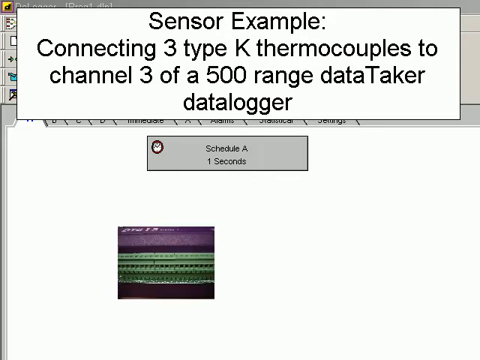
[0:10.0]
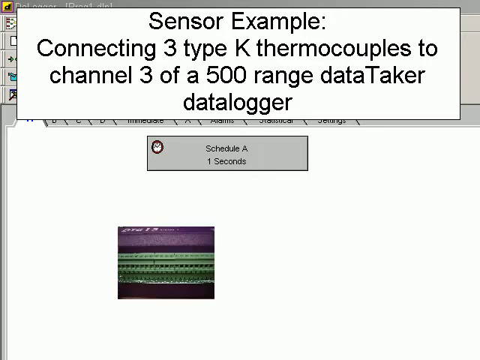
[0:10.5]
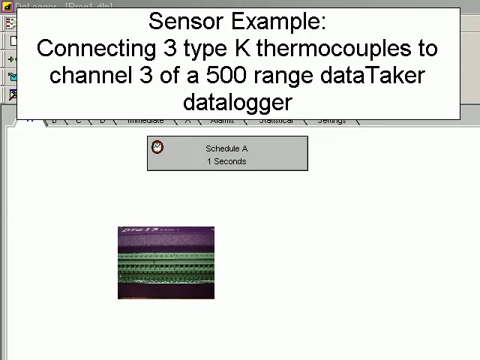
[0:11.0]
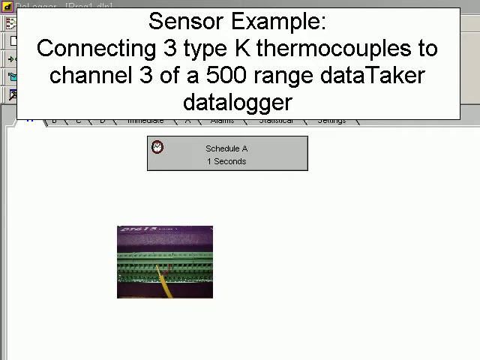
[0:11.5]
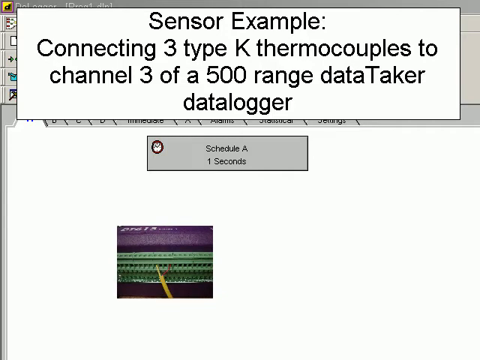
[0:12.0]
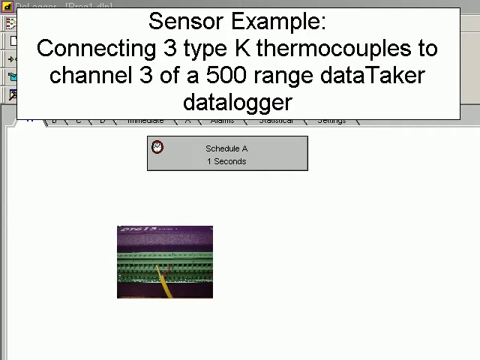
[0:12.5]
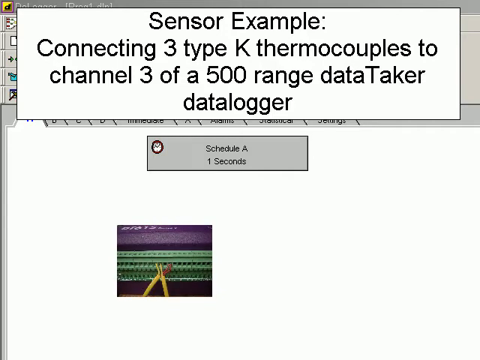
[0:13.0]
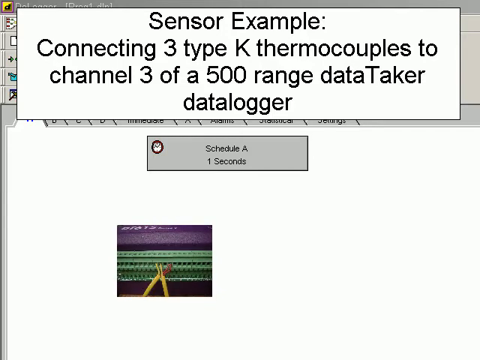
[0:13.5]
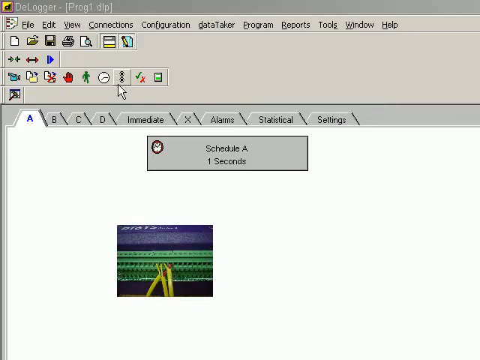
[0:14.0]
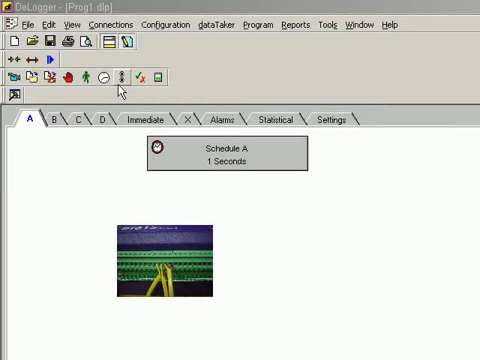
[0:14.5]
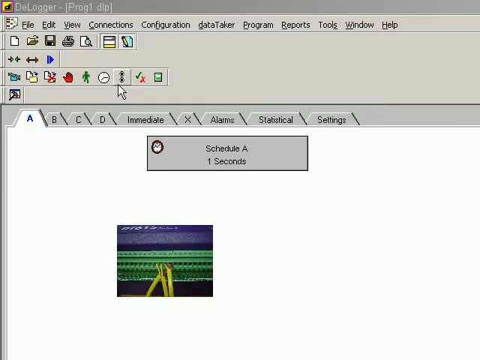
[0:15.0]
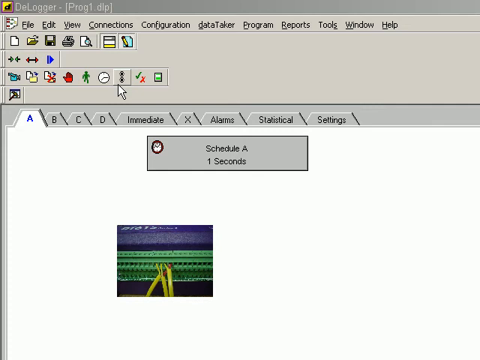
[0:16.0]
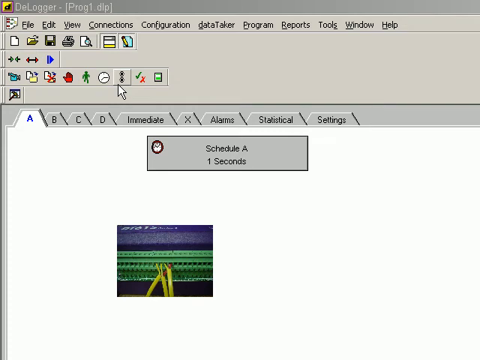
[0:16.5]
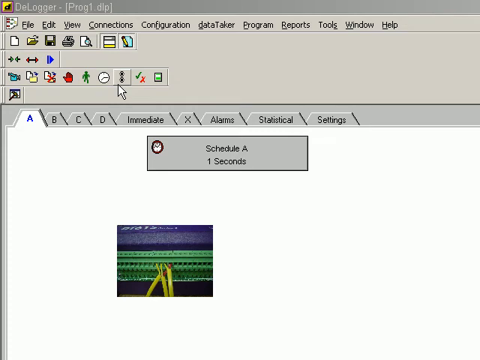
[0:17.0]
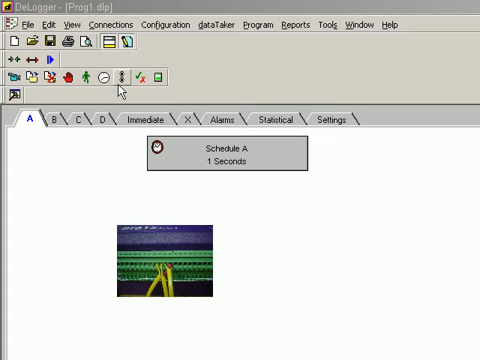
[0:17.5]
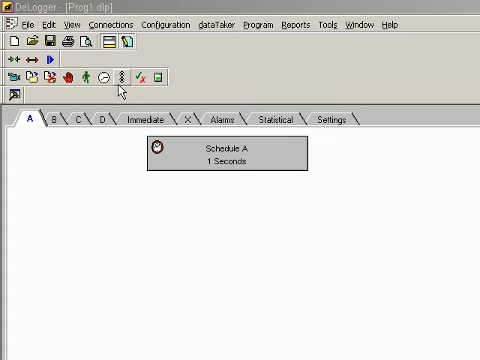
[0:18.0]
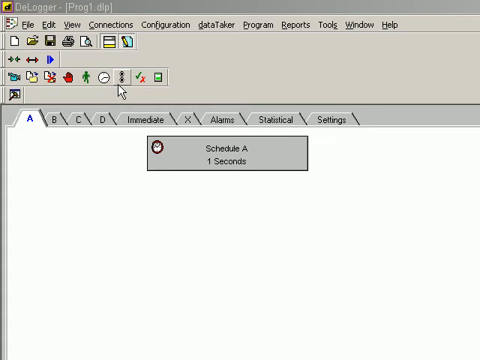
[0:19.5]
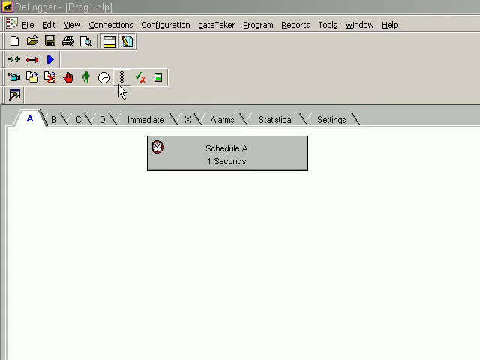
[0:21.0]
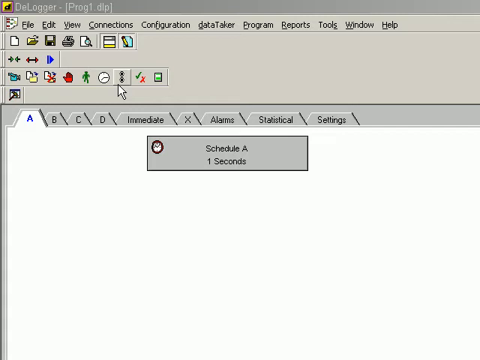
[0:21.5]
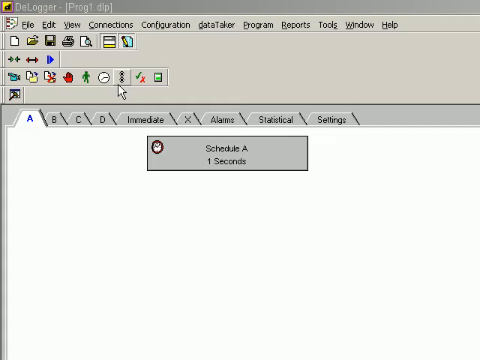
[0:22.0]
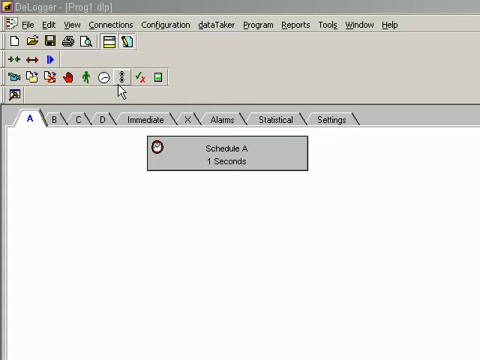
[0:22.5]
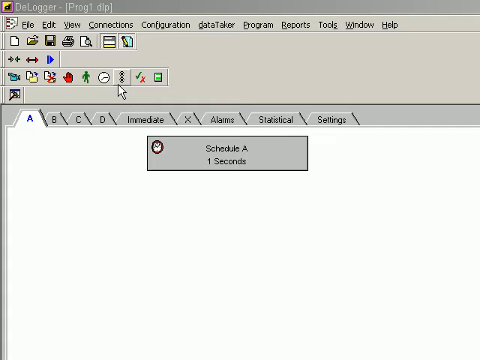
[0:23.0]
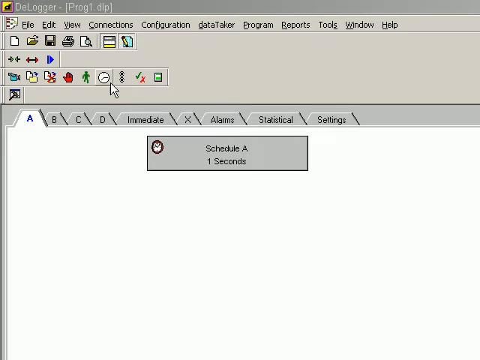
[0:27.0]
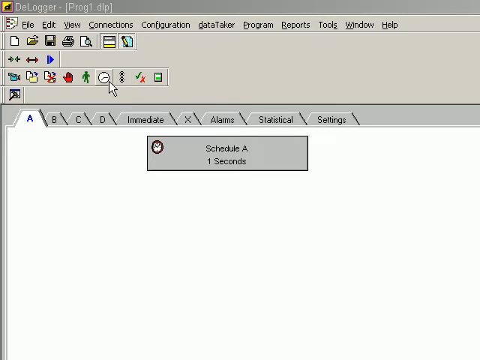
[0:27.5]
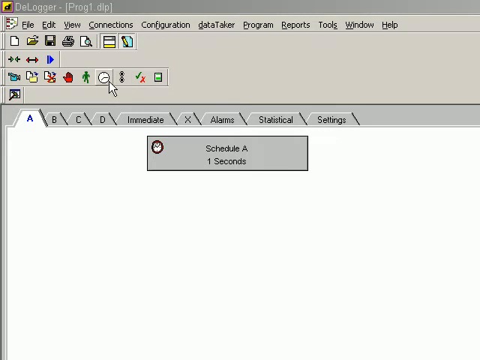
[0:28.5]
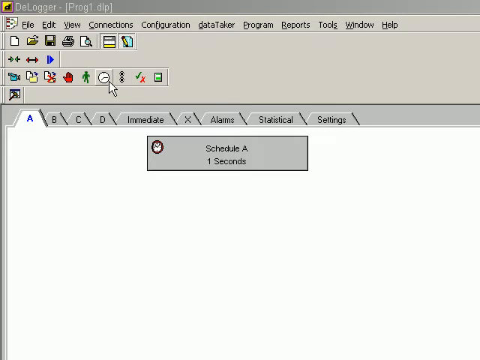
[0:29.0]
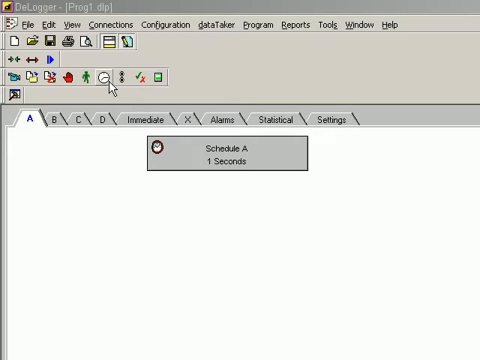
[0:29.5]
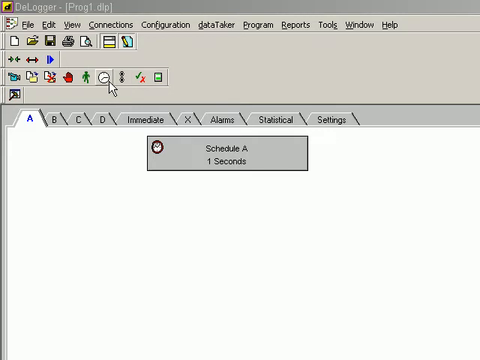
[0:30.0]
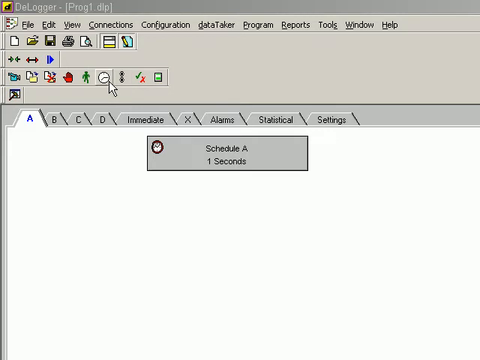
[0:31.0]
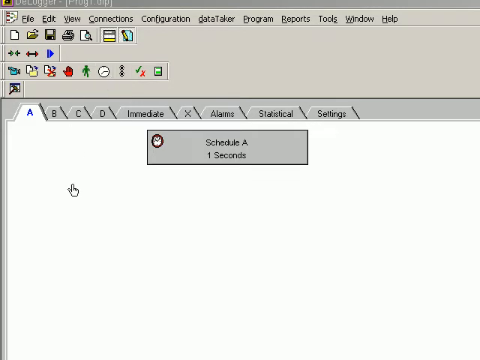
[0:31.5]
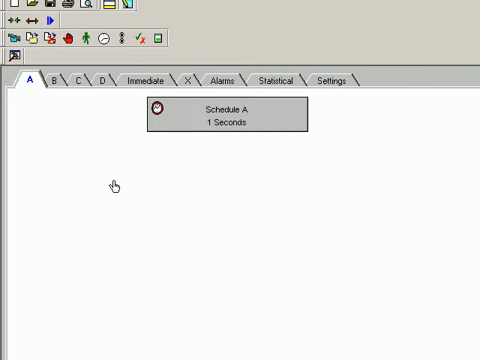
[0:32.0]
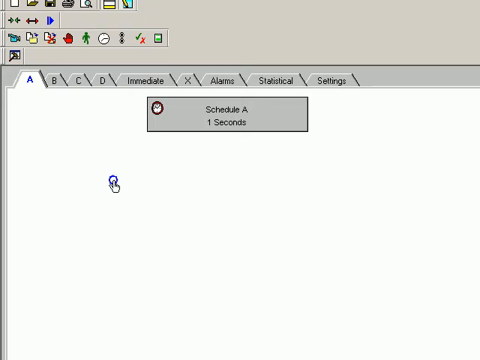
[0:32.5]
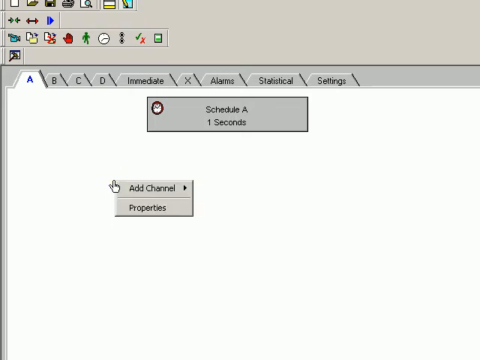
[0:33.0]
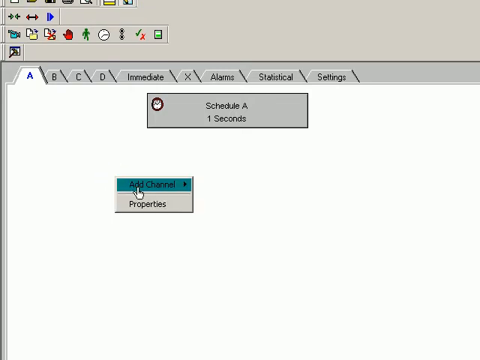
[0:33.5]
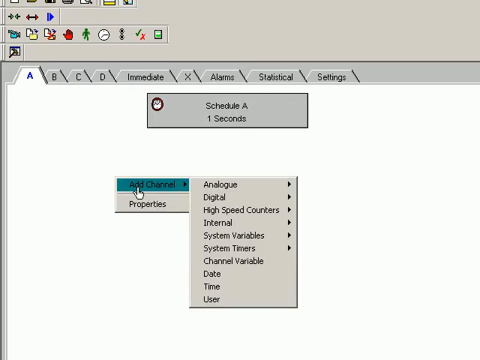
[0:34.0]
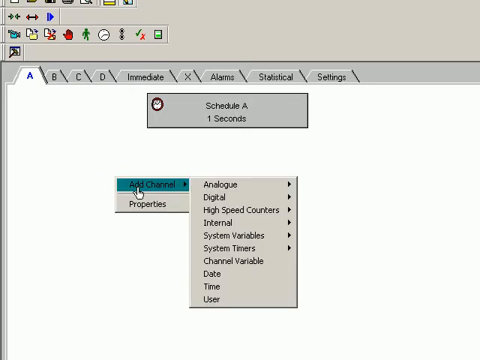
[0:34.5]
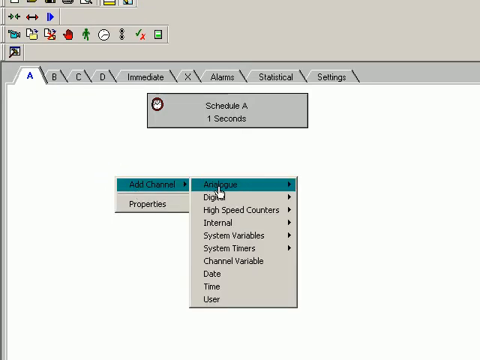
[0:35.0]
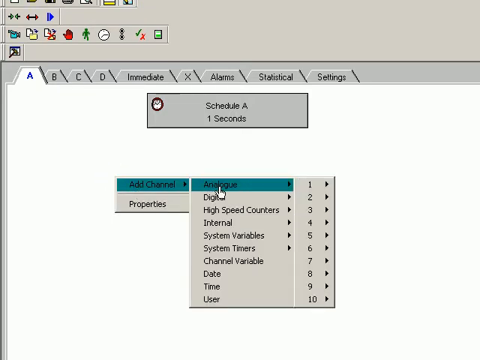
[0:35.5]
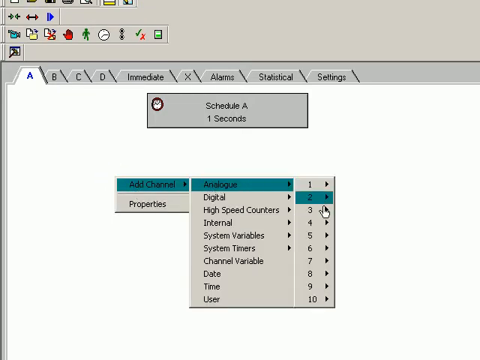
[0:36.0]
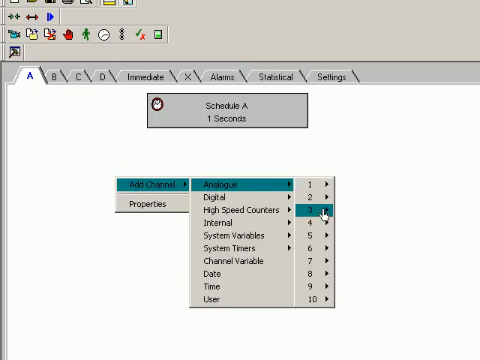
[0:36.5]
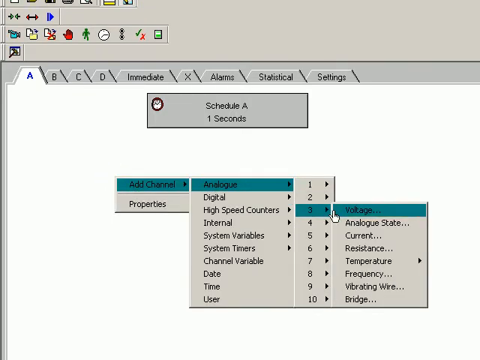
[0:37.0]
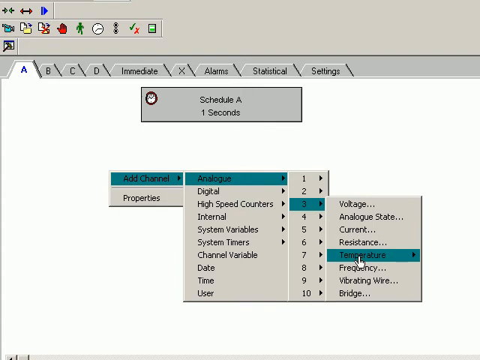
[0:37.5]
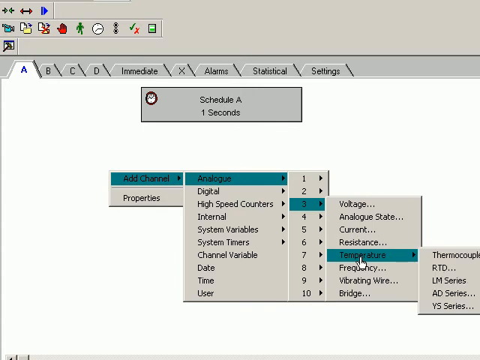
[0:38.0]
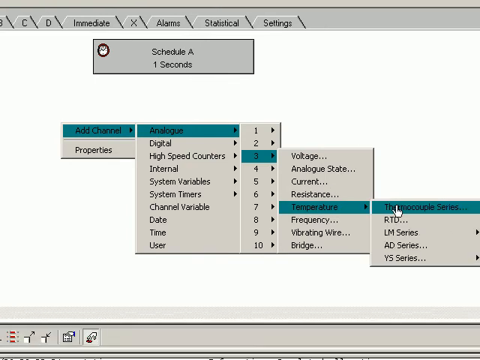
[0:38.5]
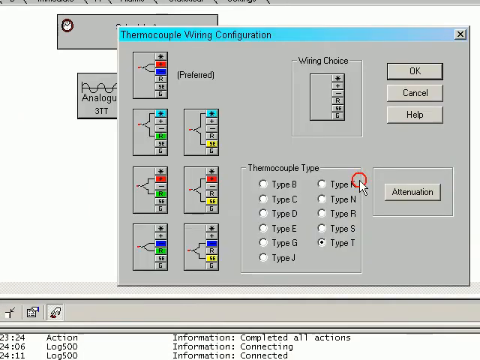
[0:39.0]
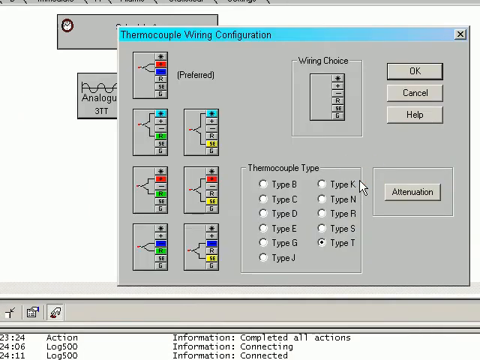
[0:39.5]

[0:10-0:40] Another image shows two cables connecting to some sort of socket, one seemingly a yellow cable; this time it is a zoomed-out photo, with what looks like purple lighting at the top. The image flashes to a different one, and in each image another cable has been added. The large white text at the very top has been removed. The picture is then deleted, leaving just a white screen. There are several tabs, and tab A, the first one on the left, is currently selected; at the top there are some tool buttons. The mouse kind of scrolls down and apparently right-clicks, bringing up an add channel button that branches out to several other menus. Analog is clicked, then another menu shows "three"; hovering over it brings out another menu full of items, and temperature is clicked. Temperature opens another menu, and the mouse apparently moves over thermocouple series.